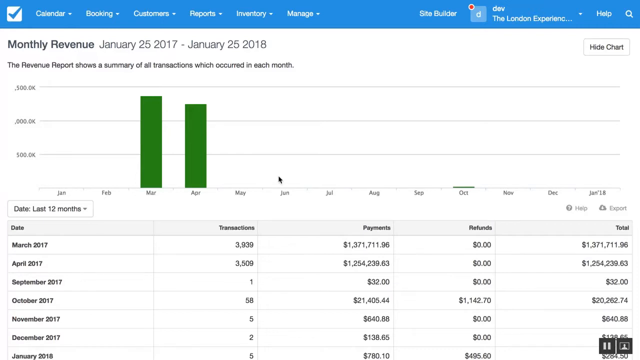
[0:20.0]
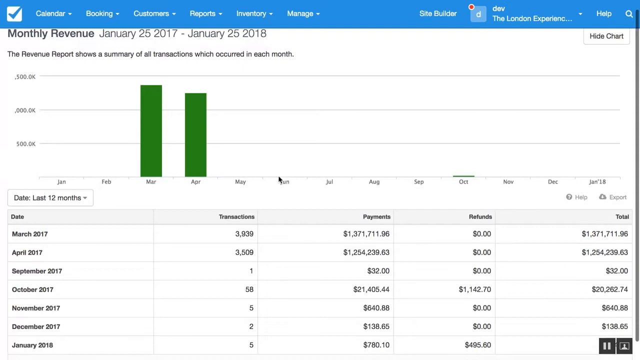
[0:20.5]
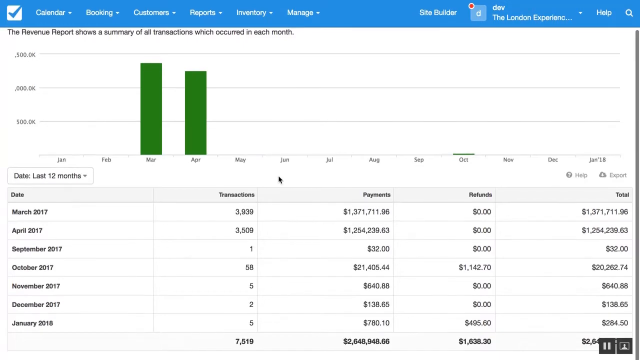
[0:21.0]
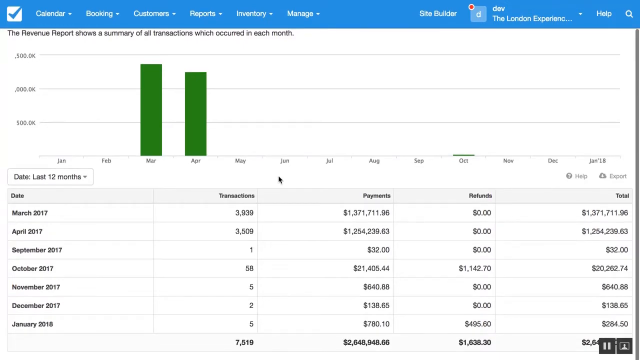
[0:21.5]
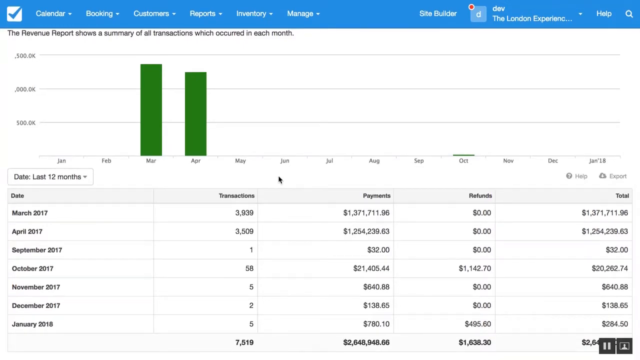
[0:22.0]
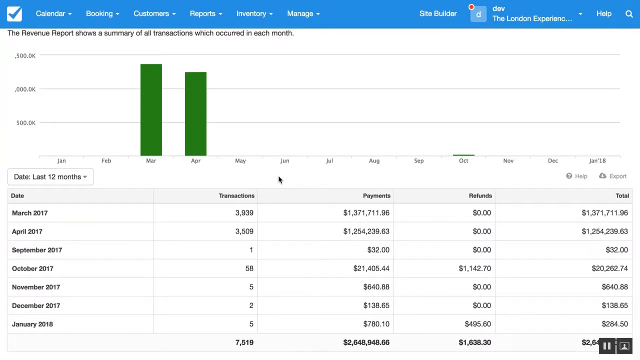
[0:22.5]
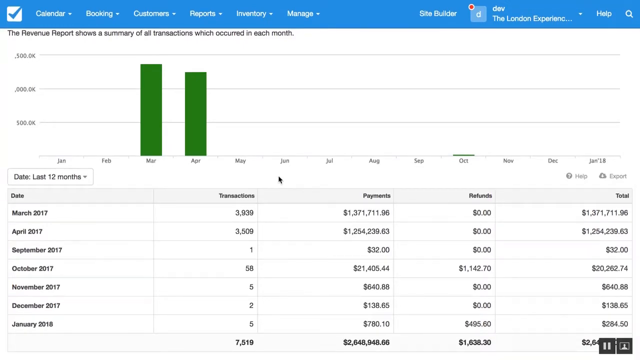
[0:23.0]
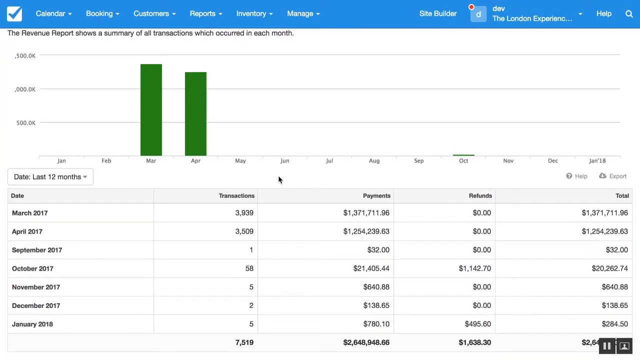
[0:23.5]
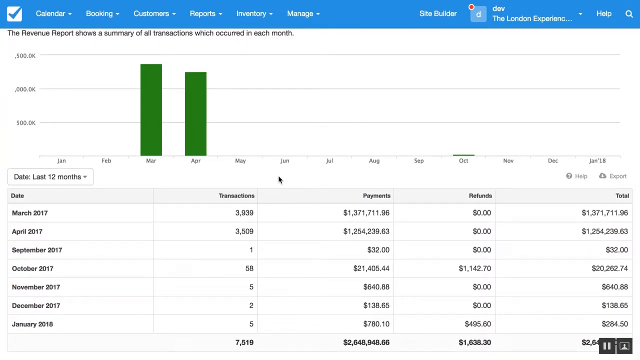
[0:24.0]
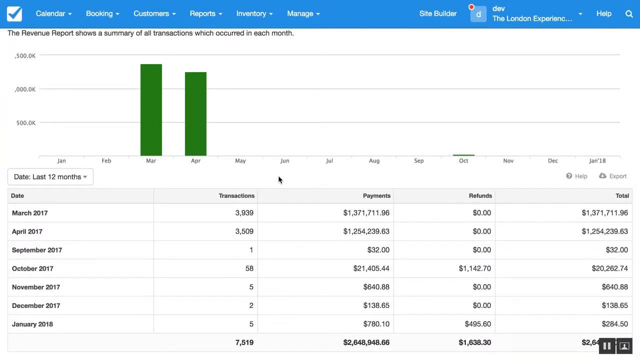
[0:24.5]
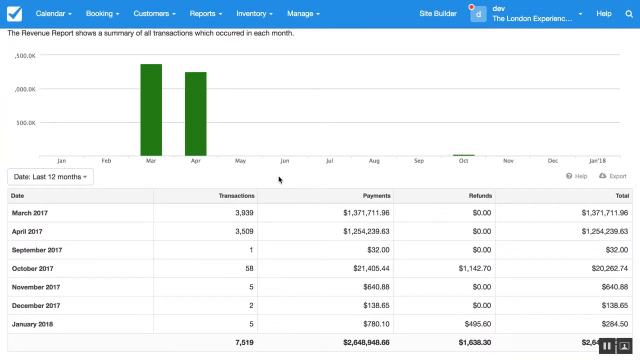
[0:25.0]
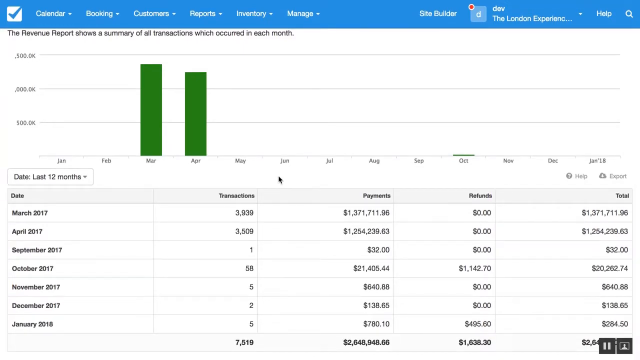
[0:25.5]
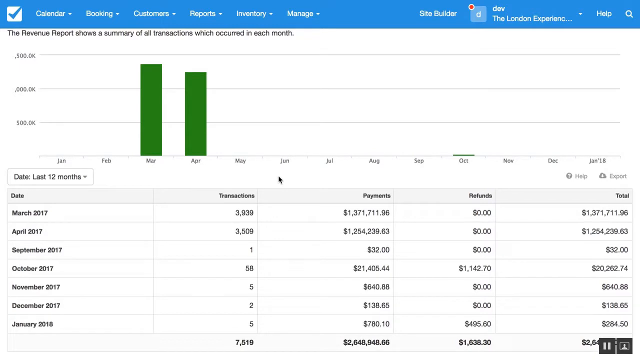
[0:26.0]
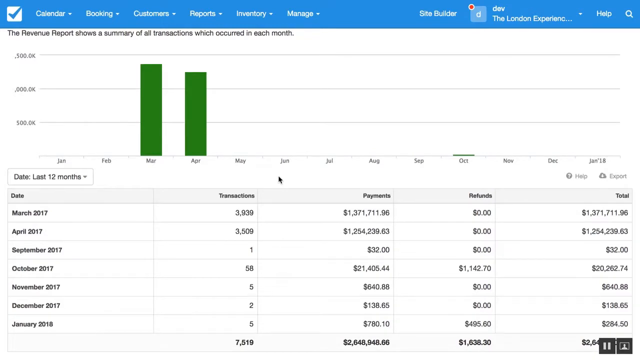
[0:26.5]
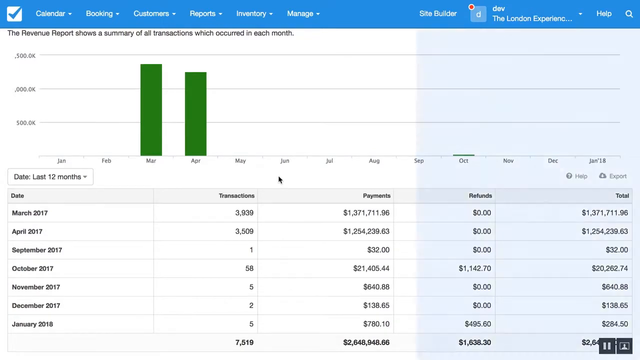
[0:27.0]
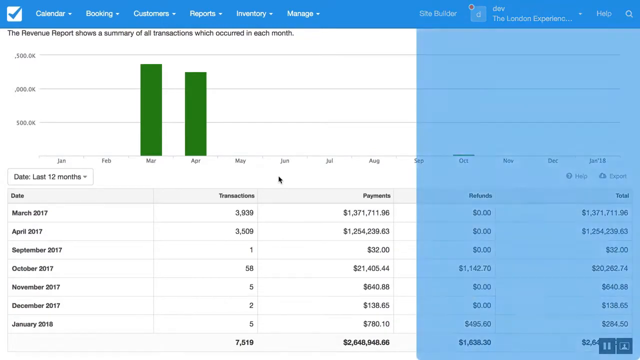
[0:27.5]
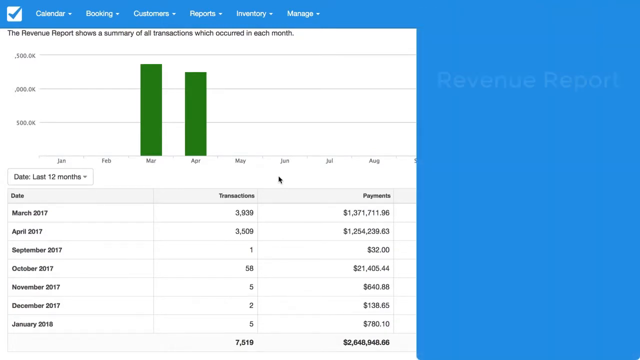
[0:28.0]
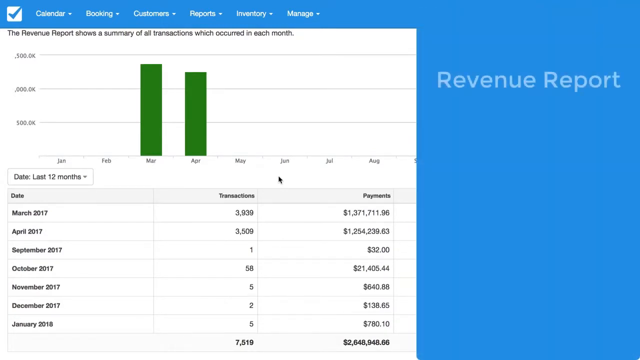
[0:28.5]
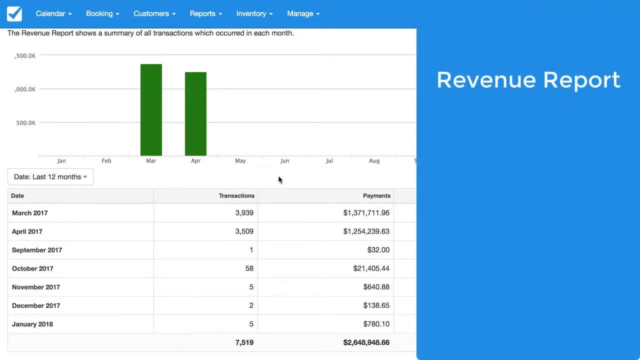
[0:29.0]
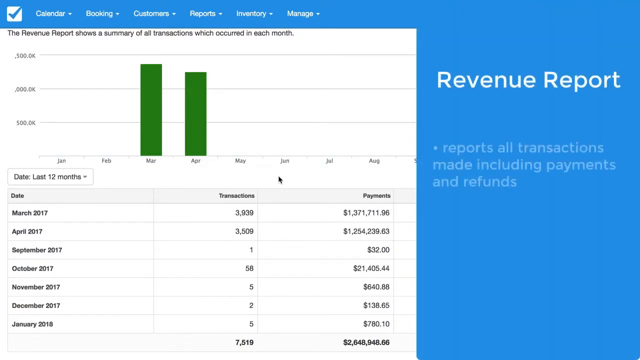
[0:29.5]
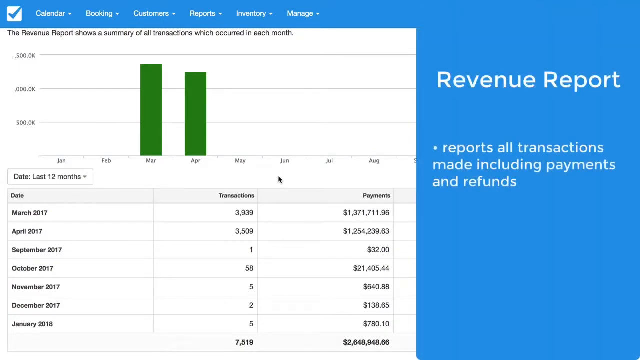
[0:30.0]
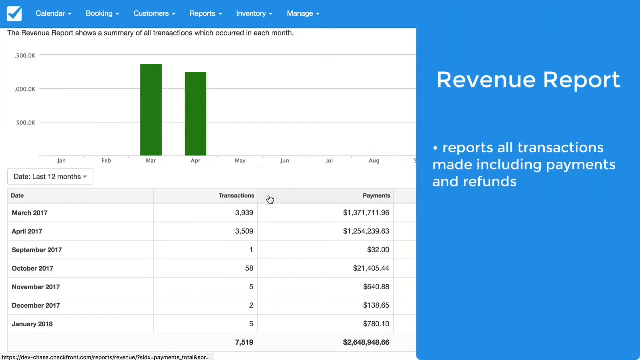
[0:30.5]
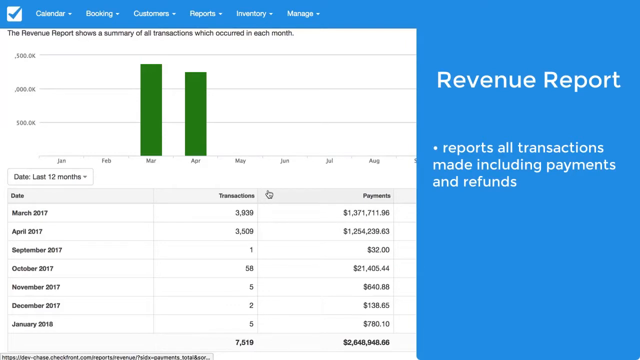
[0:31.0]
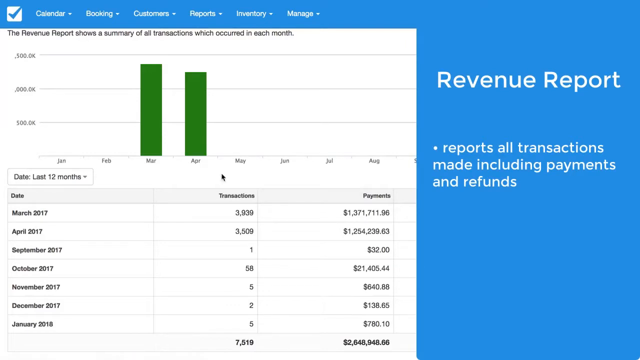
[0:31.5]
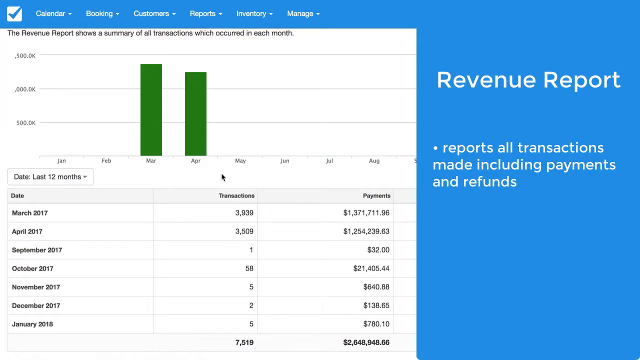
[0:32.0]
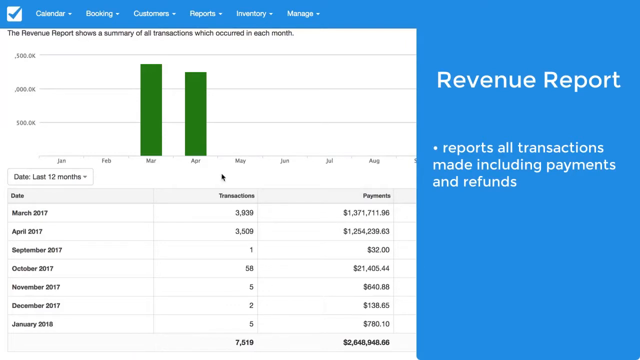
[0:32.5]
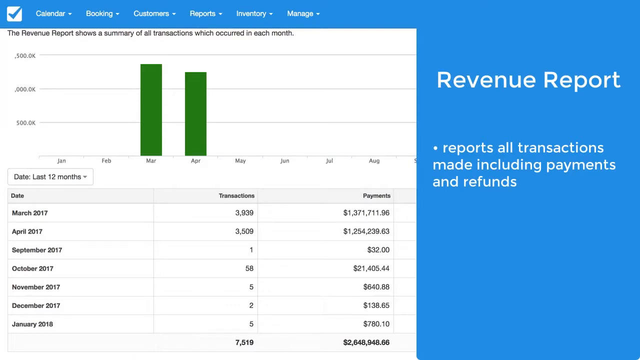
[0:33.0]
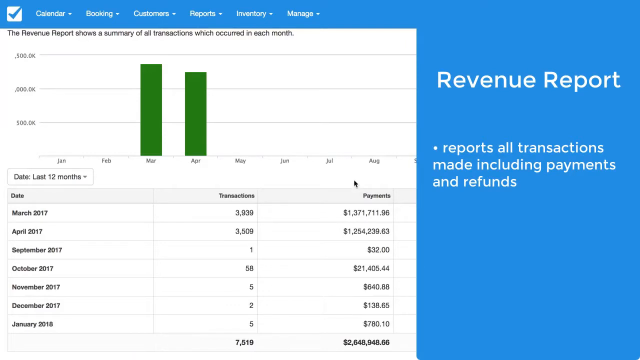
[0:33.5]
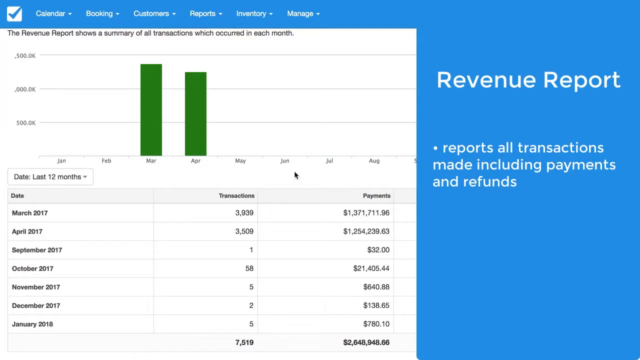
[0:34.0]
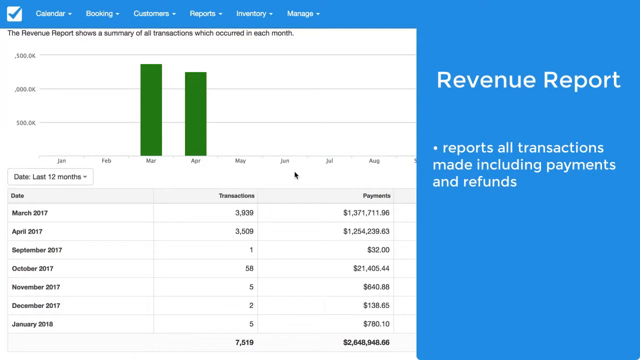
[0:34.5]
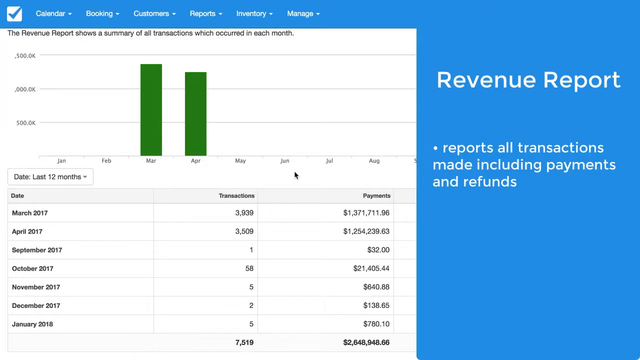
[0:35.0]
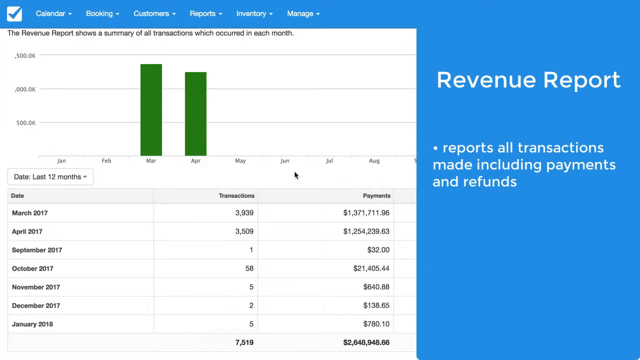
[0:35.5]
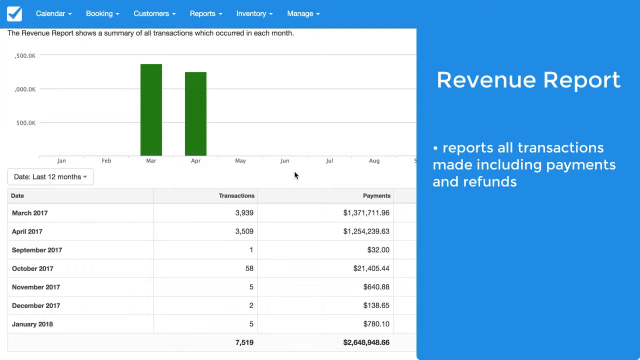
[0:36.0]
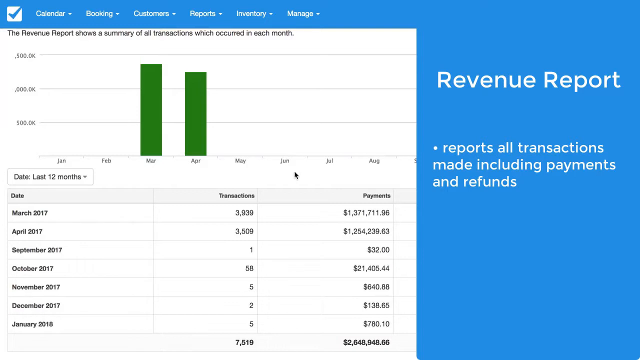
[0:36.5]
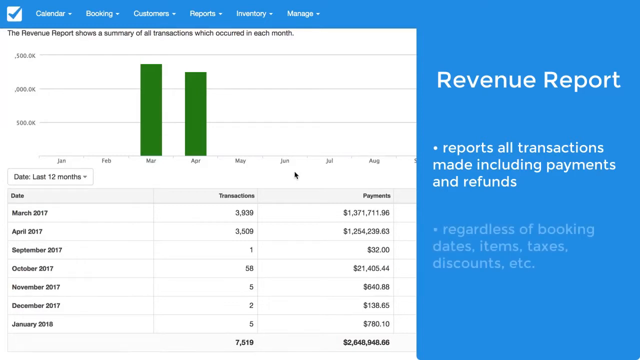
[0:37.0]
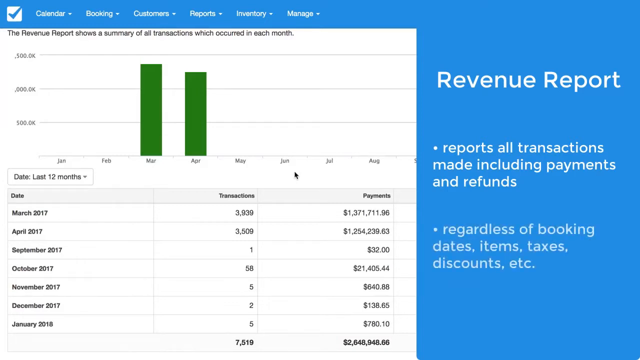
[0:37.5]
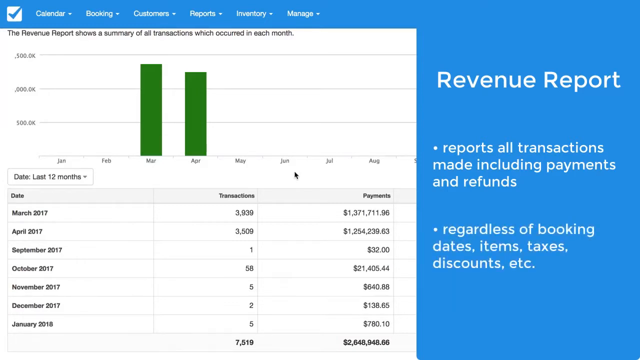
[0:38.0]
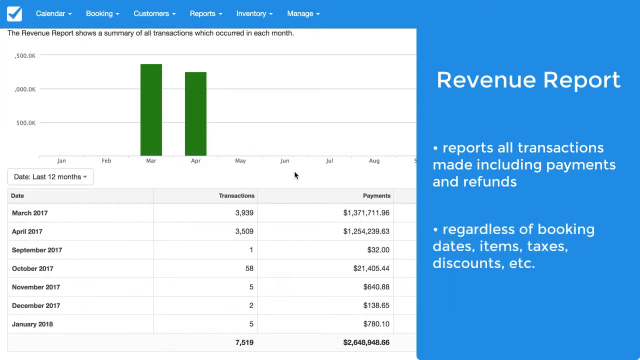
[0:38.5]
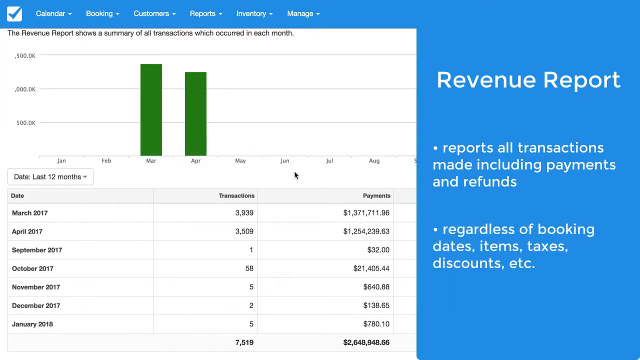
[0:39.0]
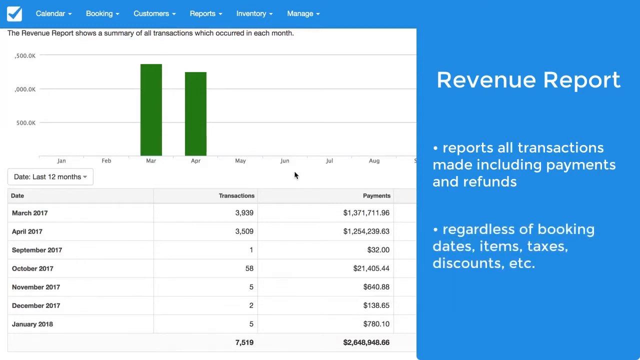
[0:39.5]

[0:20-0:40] The monthly revenue page continues, and the user scrolls down a little; a black mouse pointer is in the center. On the right, a section of text appears under the title "Revenue Reports." A first bullet point appears reading "Reports all transactions made, including payments and refunds." The pointer moves slightly to the left, then to the right. A second bullet point forms underneath the first, reading "Regardless of booking, dates, items, taxes, discounts, etc." On the left side, the bar graph still shows information only for March and April, with two green bars, the March bar a little taller than the April bar.